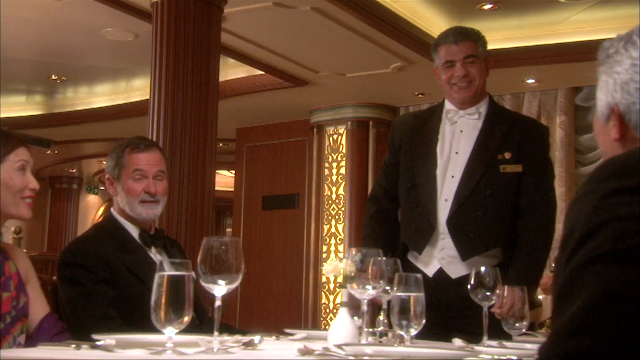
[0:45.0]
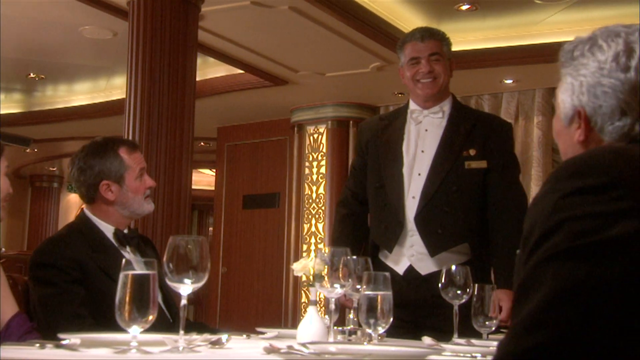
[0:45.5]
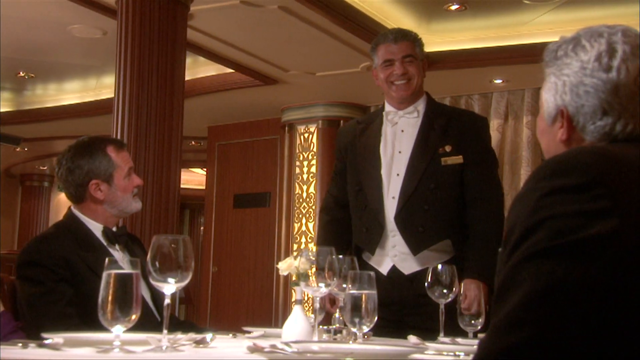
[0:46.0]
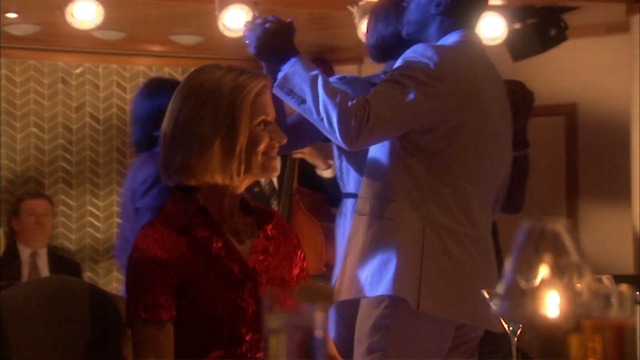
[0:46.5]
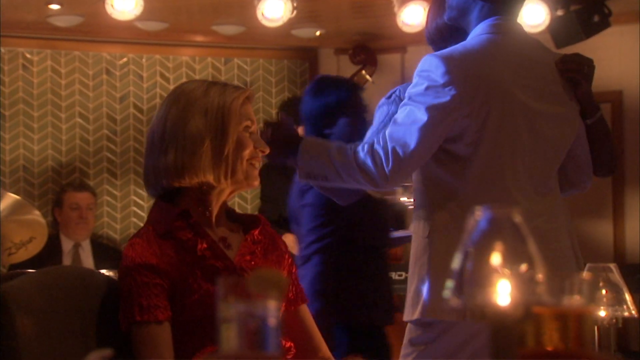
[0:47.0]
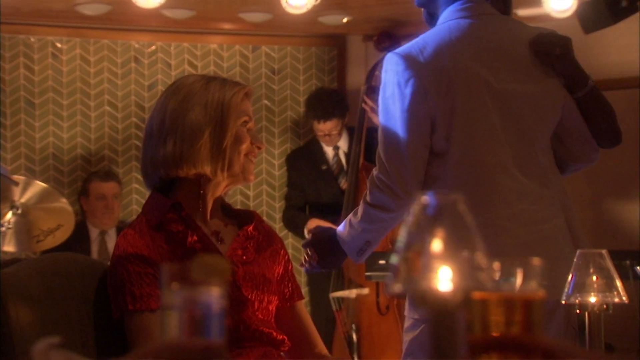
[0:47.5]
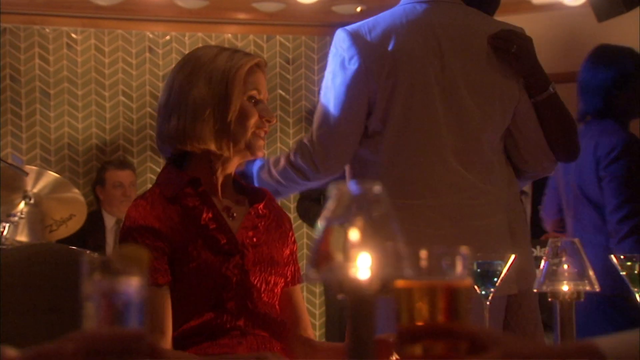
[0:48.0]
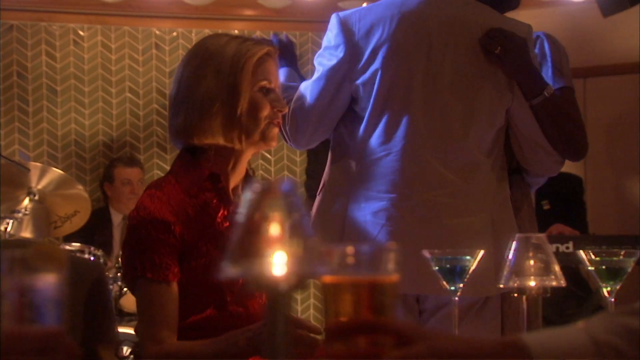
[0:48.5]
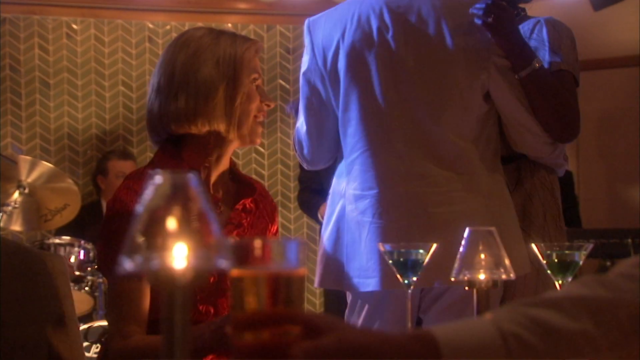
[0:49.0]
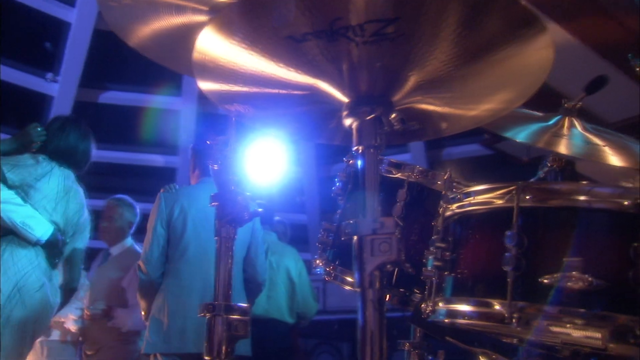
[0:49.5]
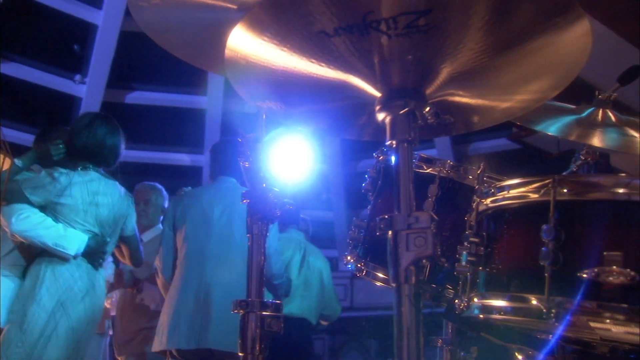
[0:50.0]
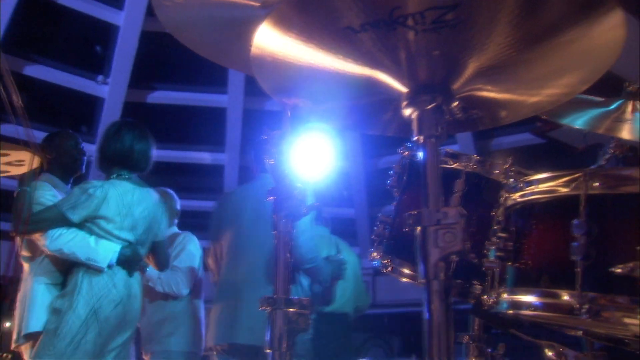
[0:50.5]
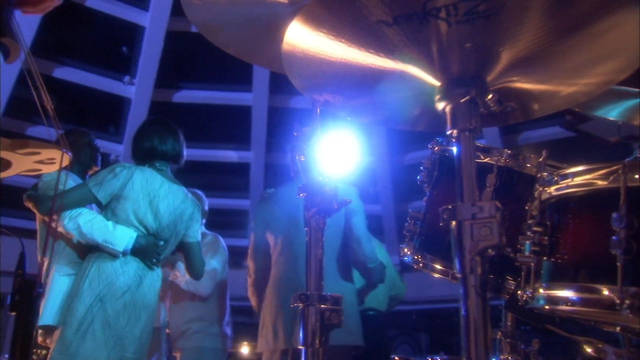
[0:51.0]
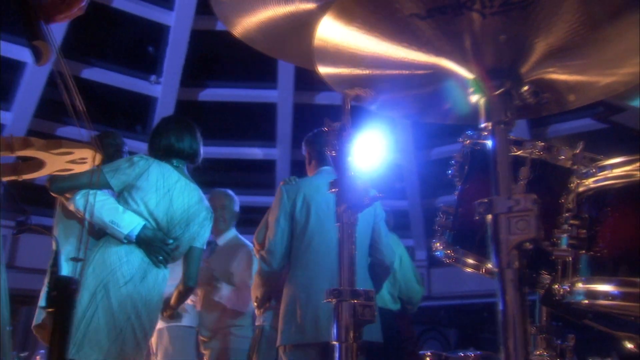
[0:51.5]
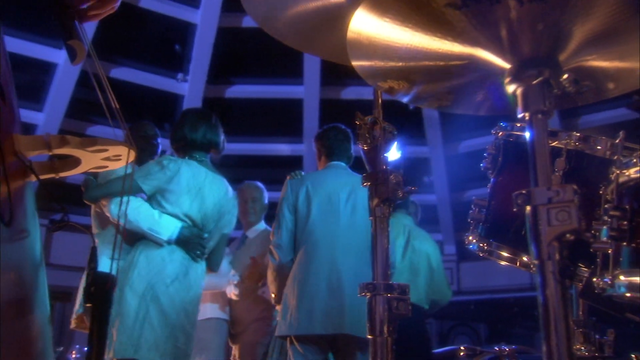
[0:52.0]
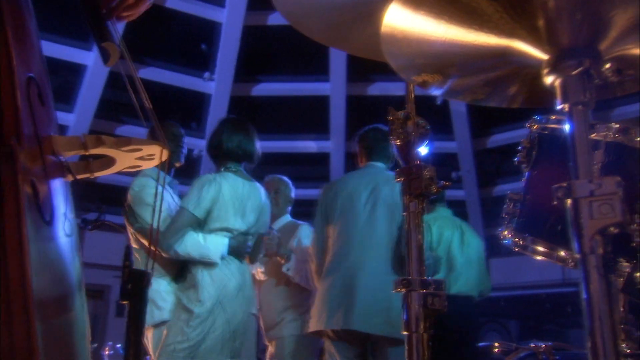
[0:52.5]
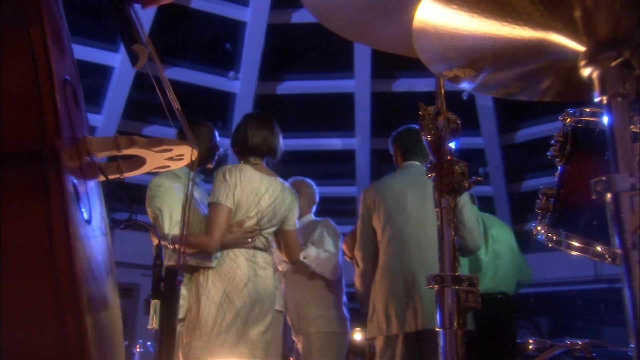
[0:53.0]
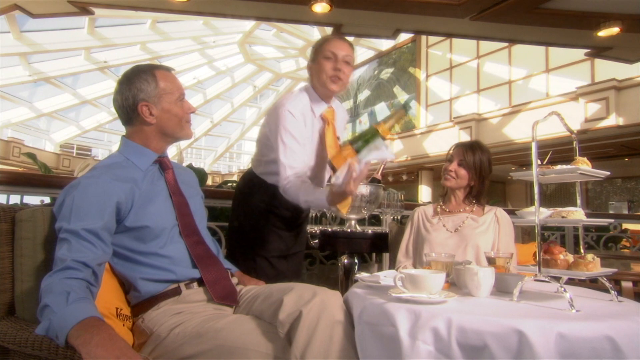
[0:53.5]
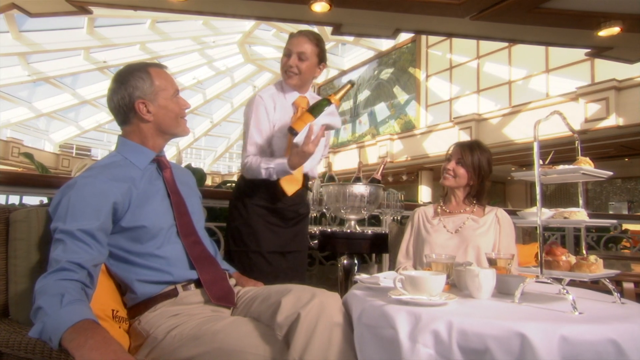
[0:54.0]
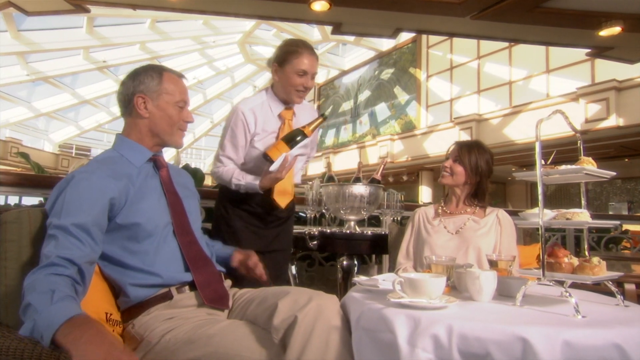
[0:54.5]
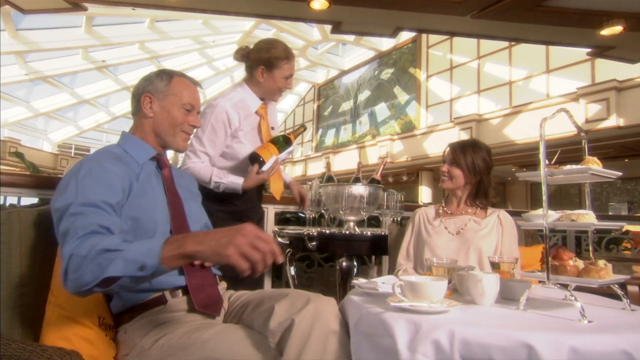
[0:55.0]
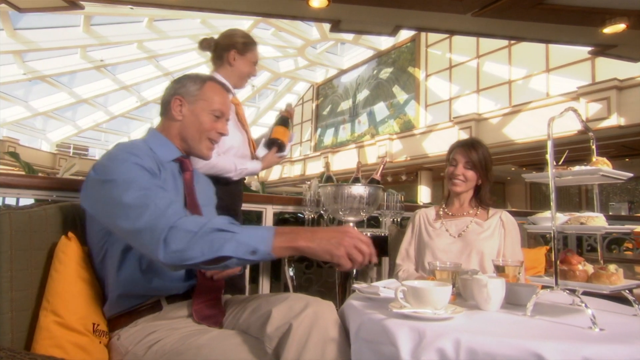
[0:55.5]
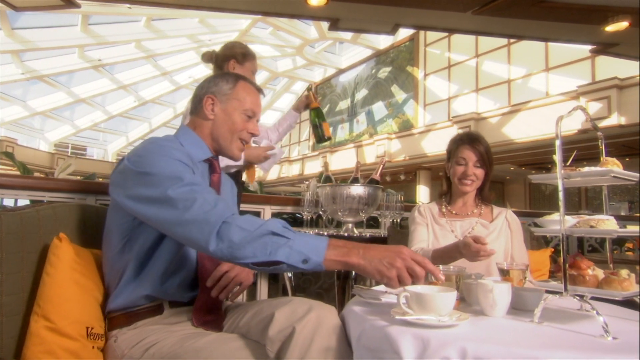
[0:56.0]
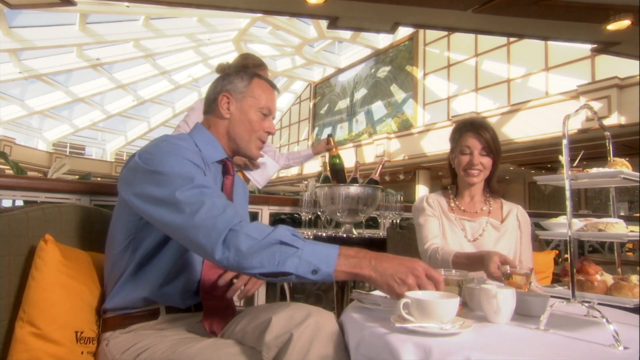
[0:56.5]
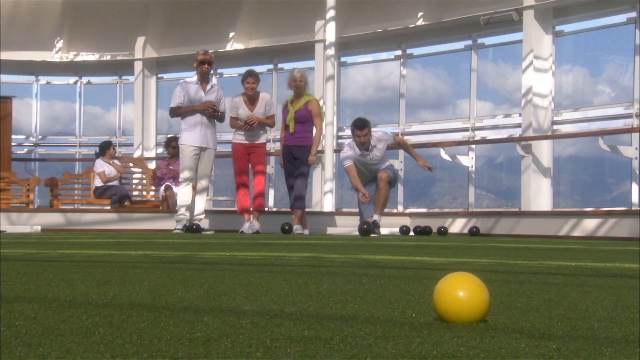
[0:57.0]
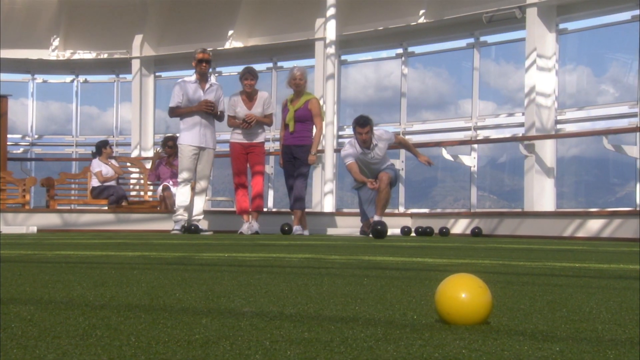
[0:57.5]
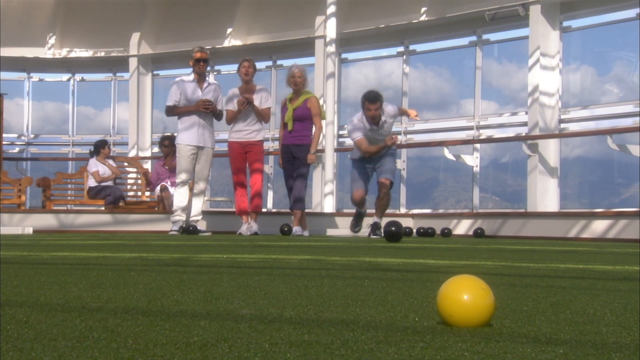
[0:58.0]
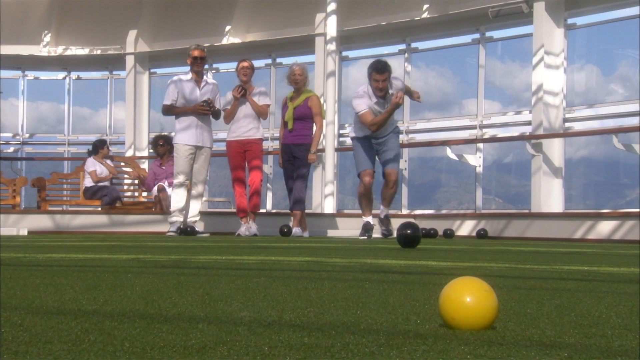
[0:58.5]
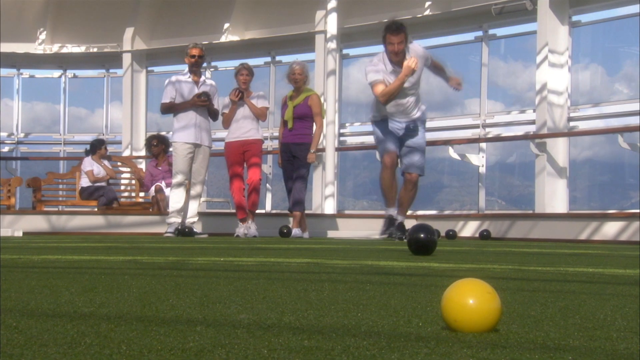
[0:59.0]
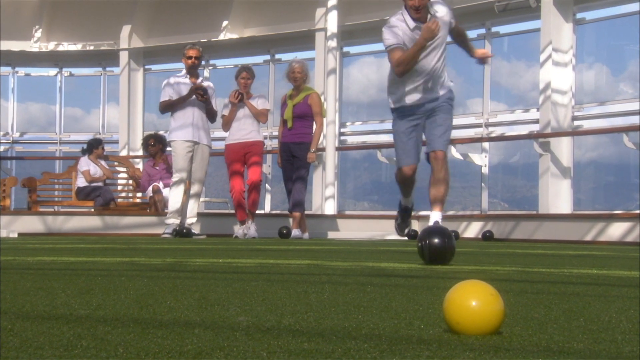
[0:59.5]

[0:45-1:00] A formally dressed waiter stands at the head of a table talking to some diners. The scene quickly shifts to various couples dancing on a dance floor, the men in suits and the women in dresses, with a band playing at the front of the room. In a different room, a man in a blue button-down shirt and red tie and a woman who seems to be in a white dress are seated at a small table, enjoying a drink served by a female server in a white shirt with a yellow tie. Next, on the deck of the ship, there is a court with green flooring, possibly a bocce court. Four people are in the shot, apparently two men and two women, playing the game and smiling; one man, wearing shorts and a white shirt, bowls the ball.